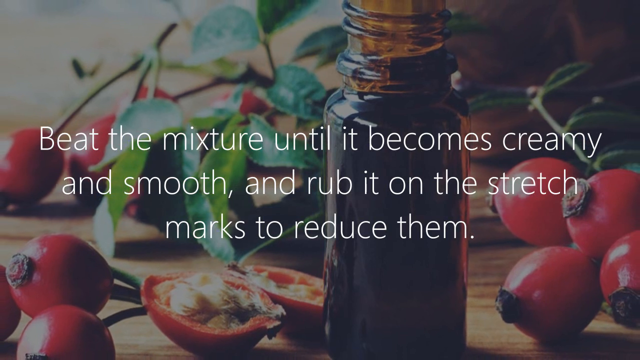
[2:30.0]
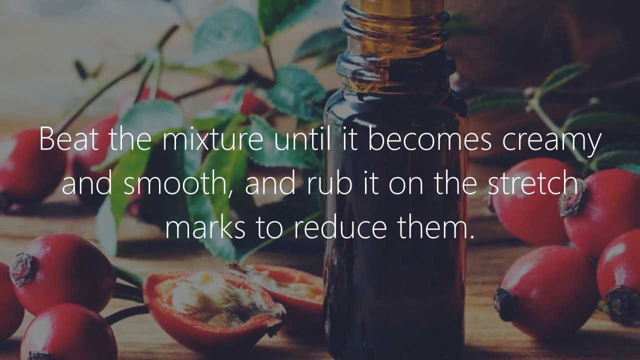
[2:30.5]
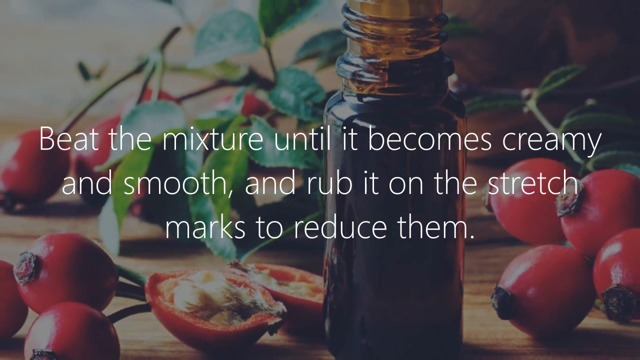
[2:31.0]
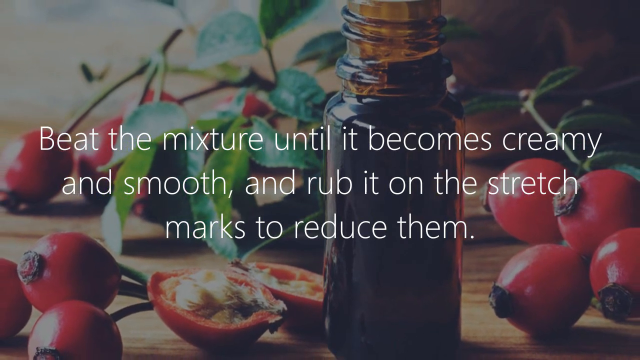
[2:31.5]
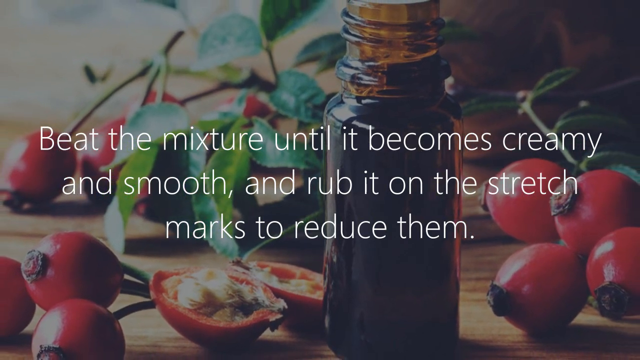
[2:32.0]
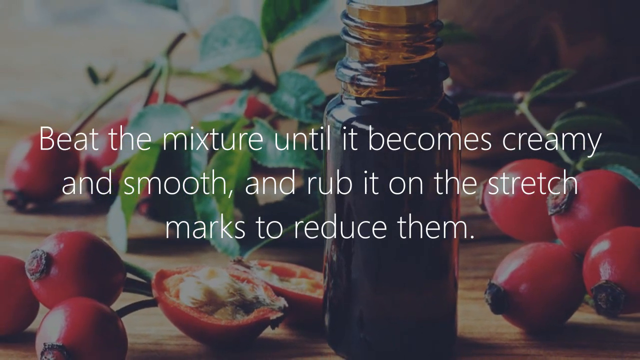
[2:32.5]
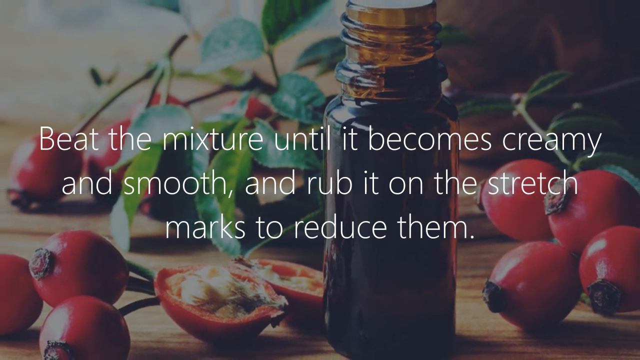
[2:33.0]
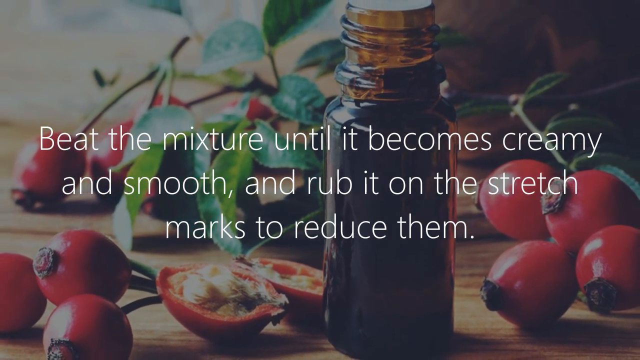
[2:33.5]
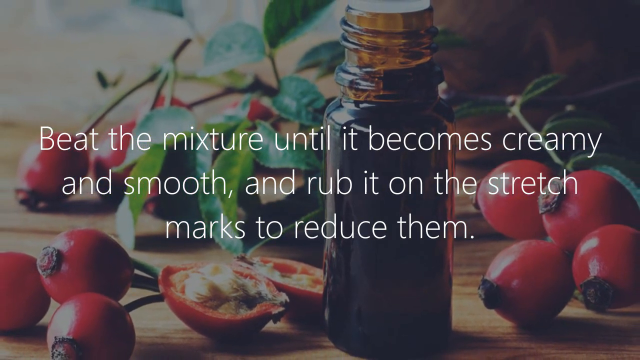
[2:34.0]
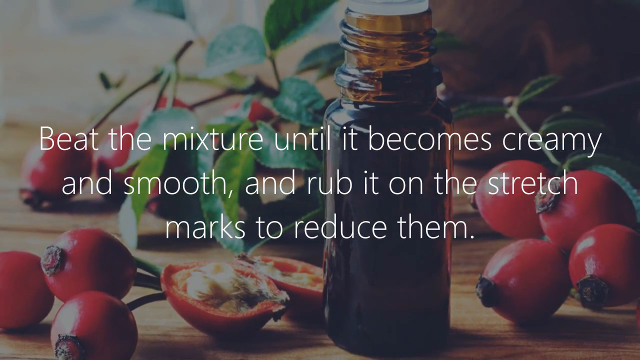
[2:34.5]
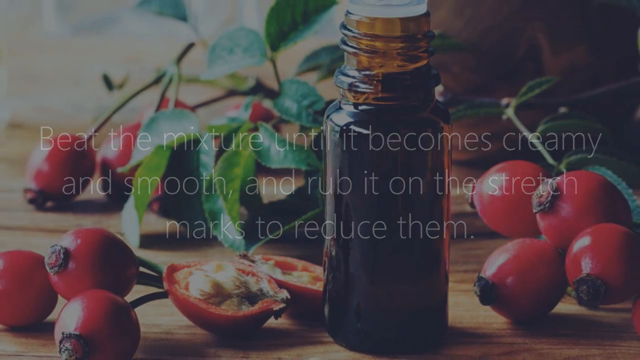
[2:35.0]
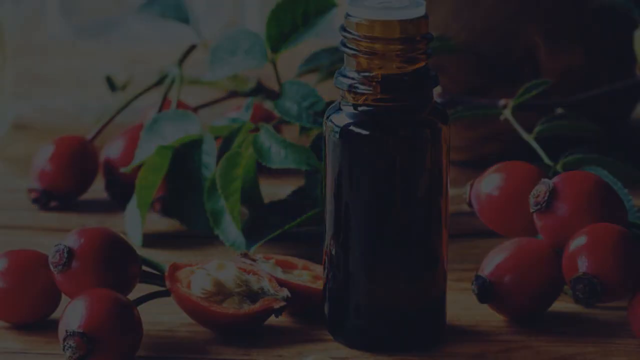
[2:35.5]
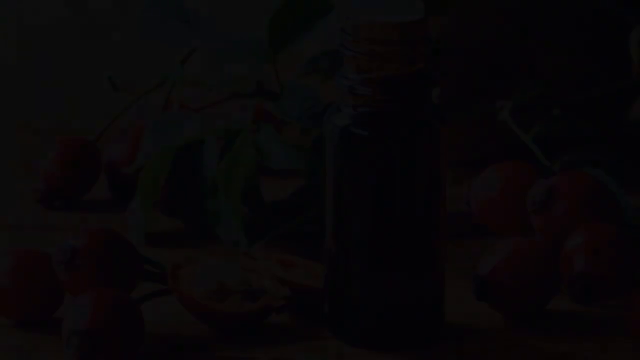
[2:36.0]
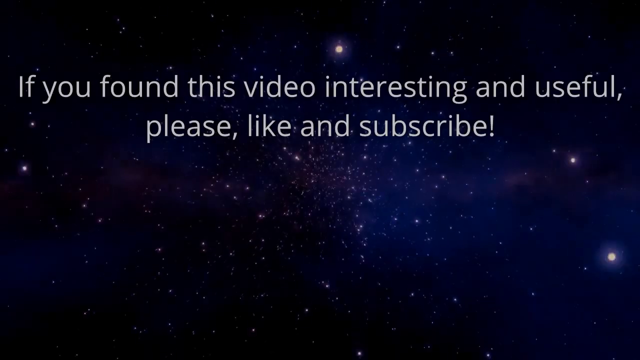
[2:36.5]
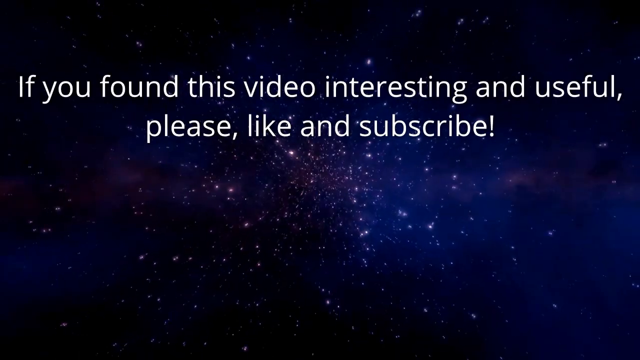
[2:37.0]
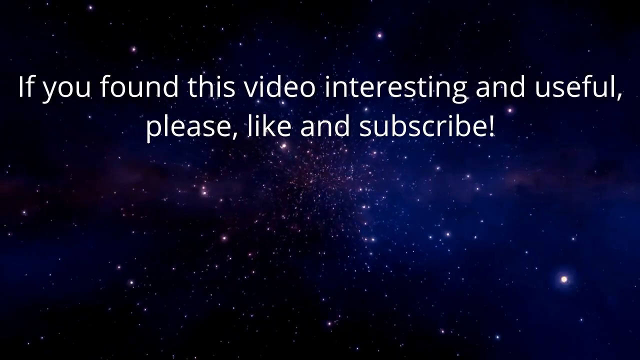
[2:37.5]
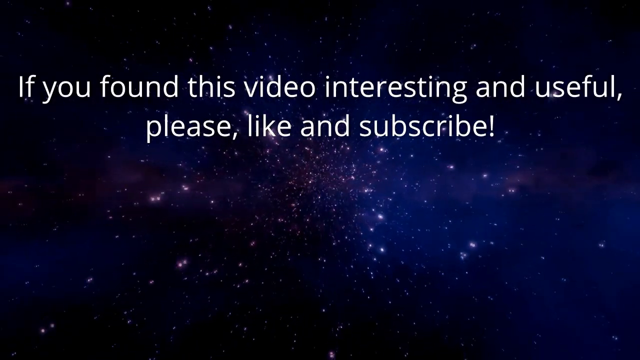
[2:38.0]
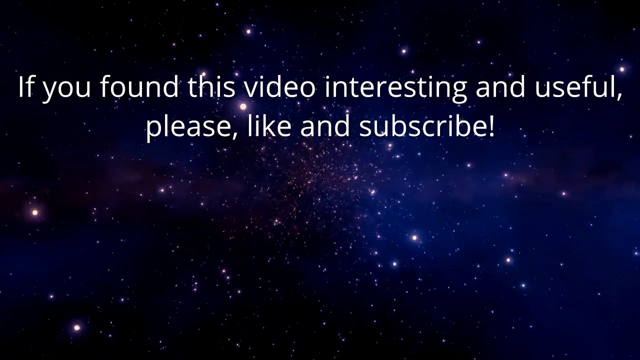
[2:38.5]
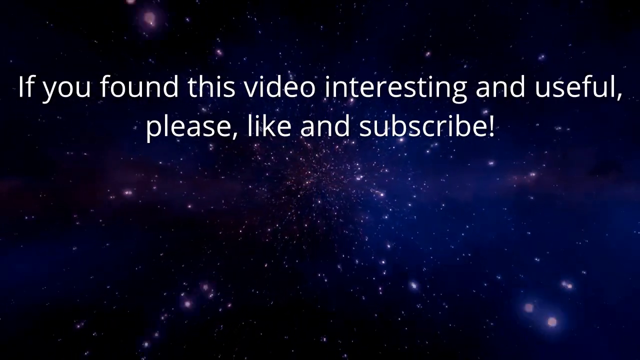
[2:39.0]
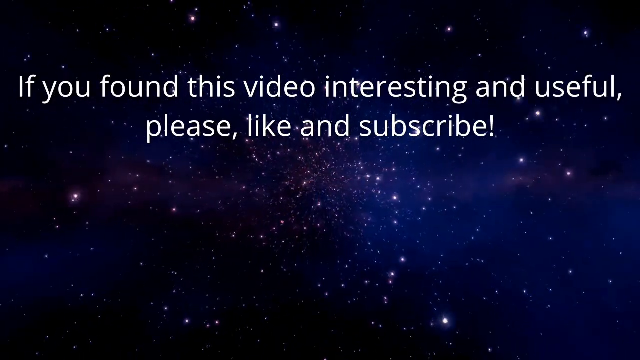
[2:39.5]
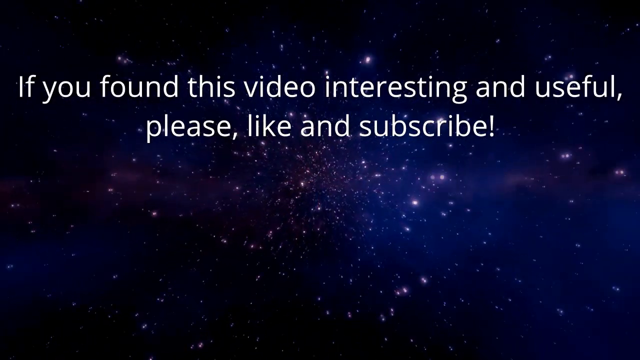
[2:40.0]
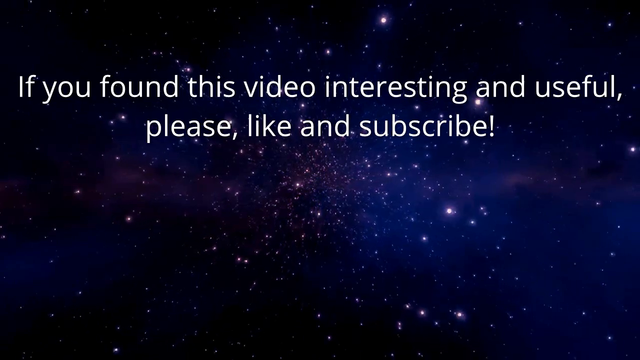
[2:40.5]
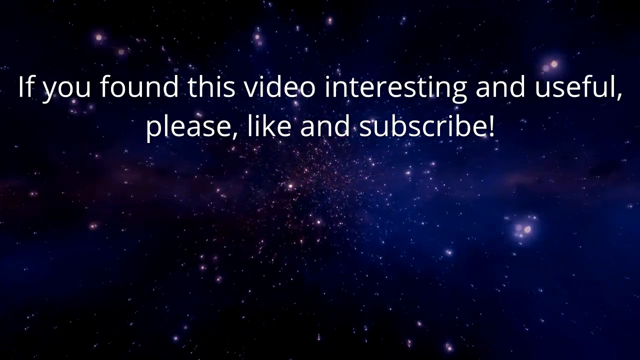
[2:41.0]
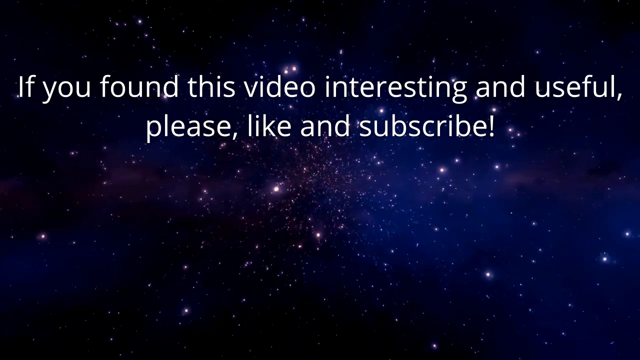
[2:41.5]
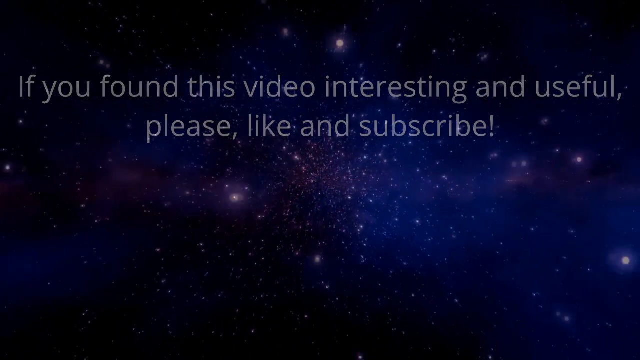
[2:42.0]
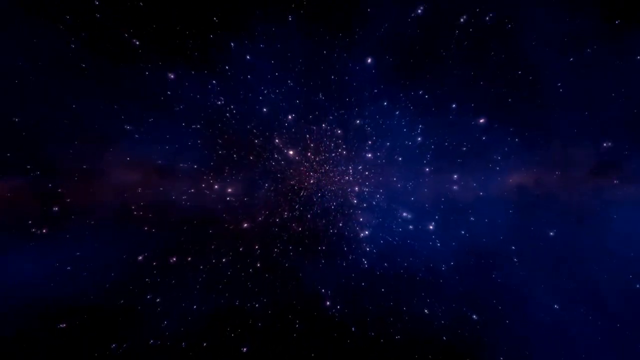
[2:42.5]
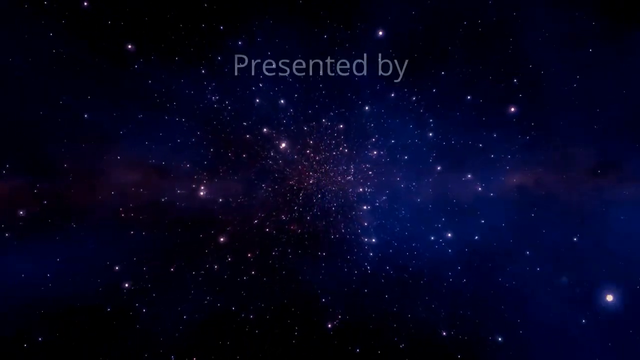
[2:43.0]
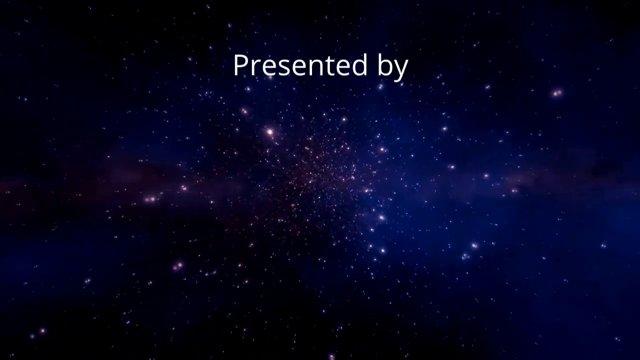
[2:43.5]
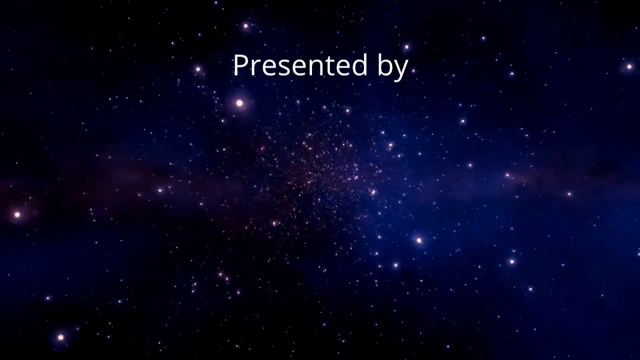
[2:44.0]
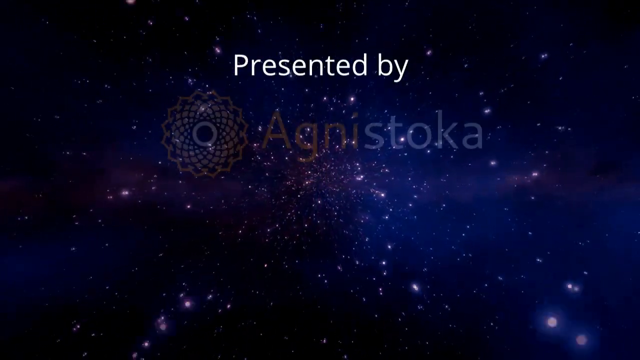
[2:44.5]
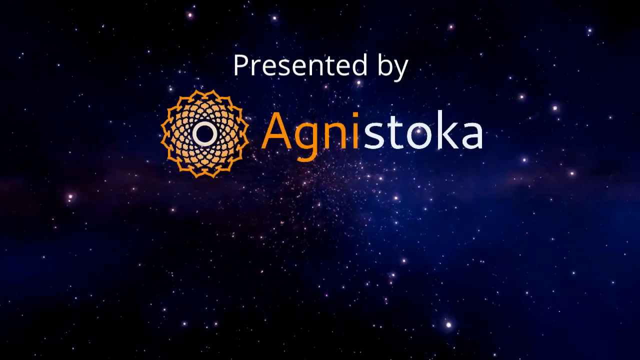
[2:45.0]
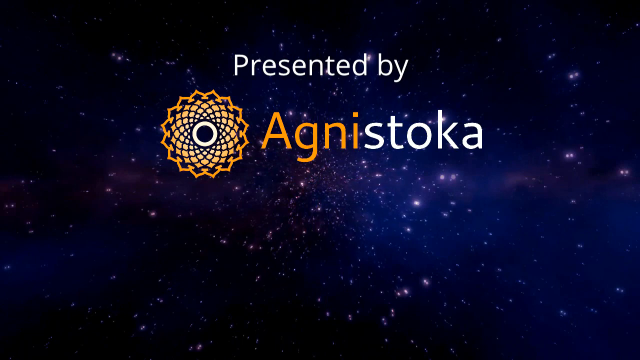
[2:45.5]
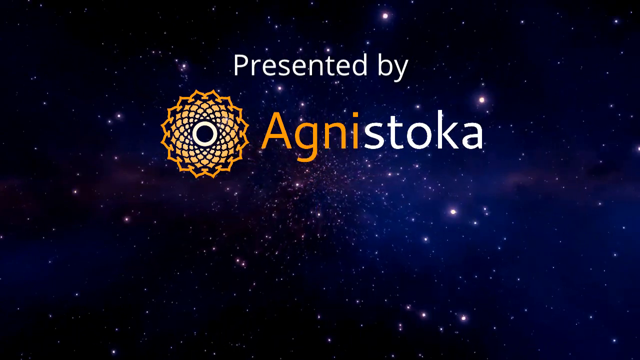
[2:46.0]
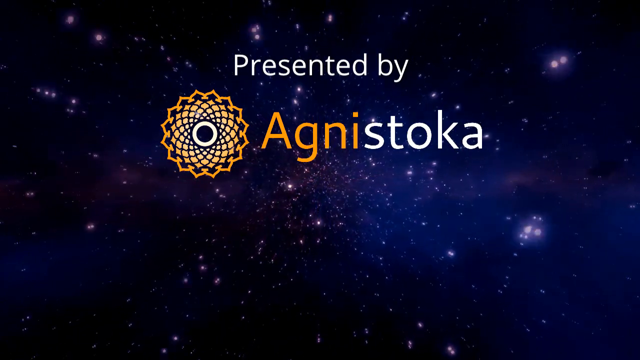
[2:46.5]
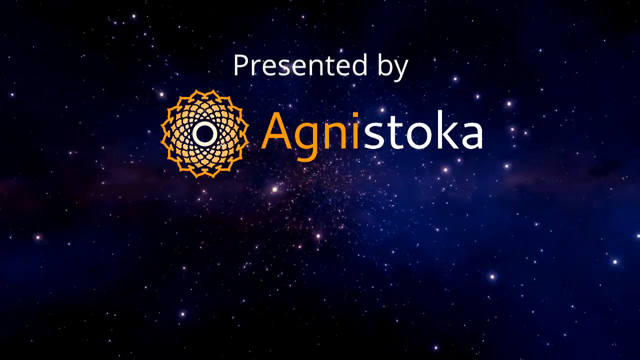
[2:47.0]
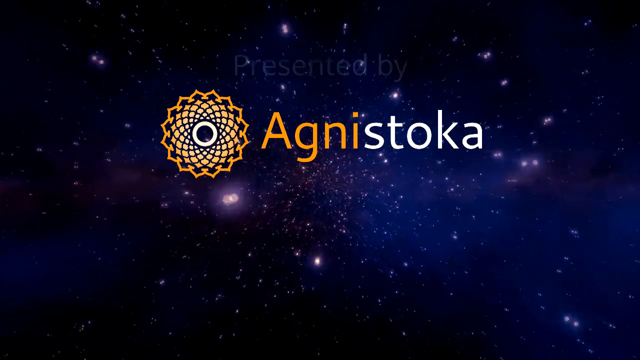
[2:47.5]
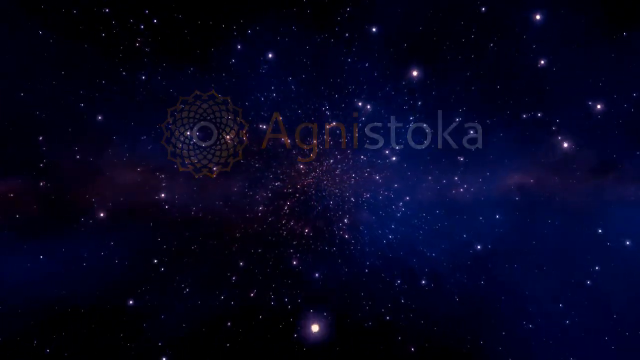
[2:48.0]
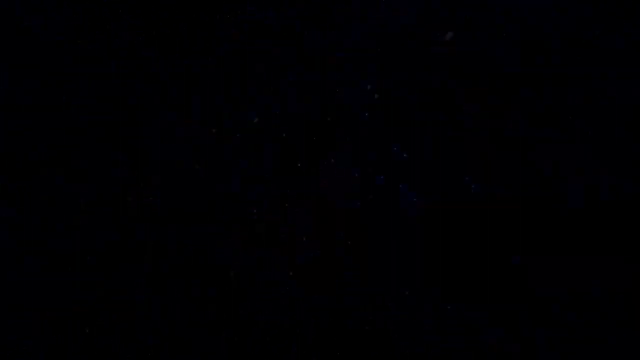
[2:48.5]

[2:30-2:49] The last benefit is presented: rosehip oil reduces stretch marks, since they are a form of scarring. The recipe is to melt a fourth of a cup of cocoa butter in a double boiler, transfer it into an electric stand mixer bowl and let it cool, then add 1 teaspoon of rosehip oil and 1 teaspoon of vitamin E oil, beat the mixture until creamy and smooth, and rub it on the stretch marks.